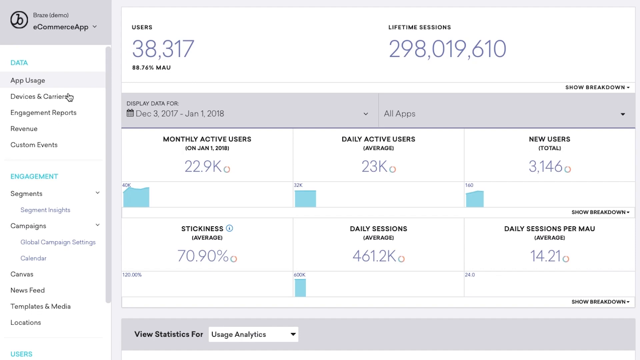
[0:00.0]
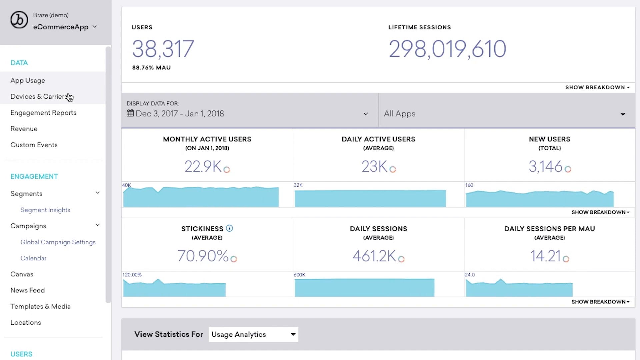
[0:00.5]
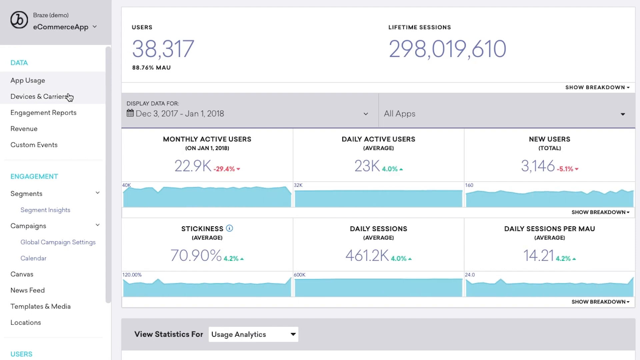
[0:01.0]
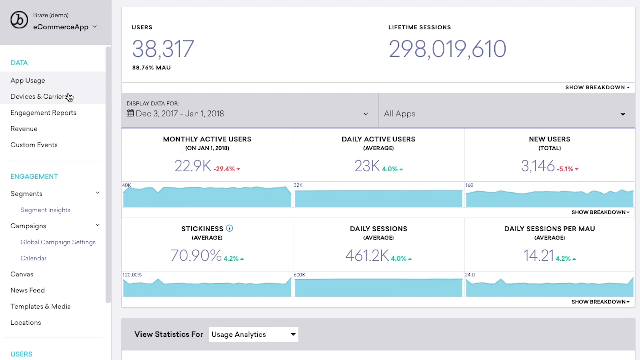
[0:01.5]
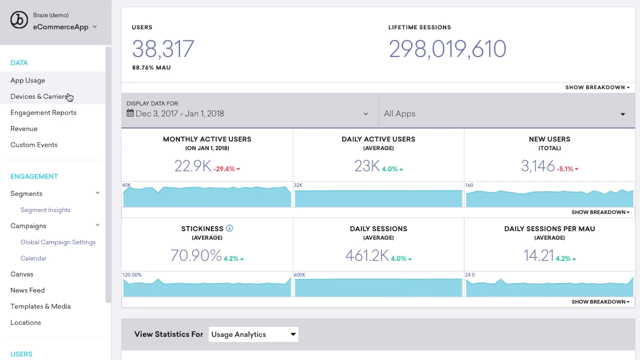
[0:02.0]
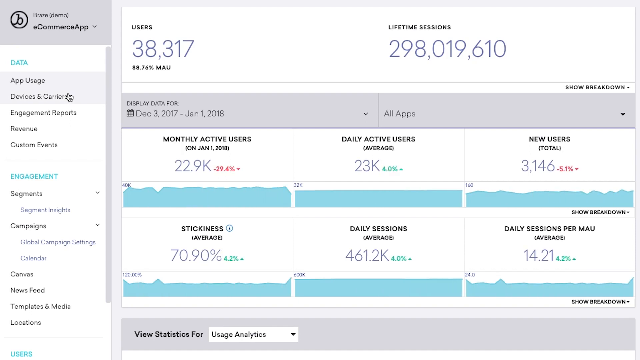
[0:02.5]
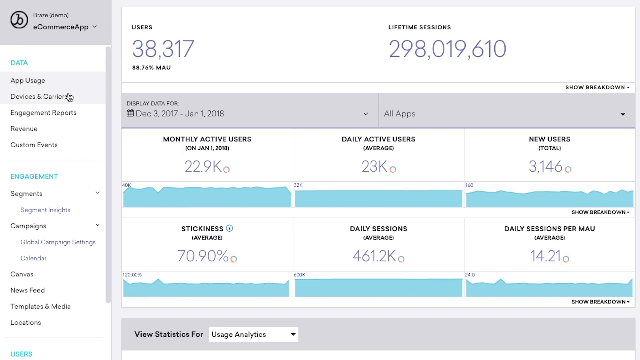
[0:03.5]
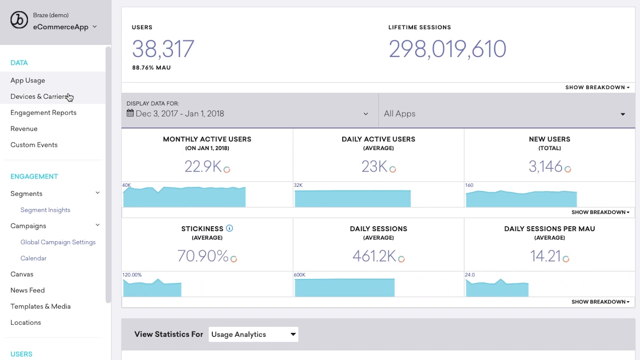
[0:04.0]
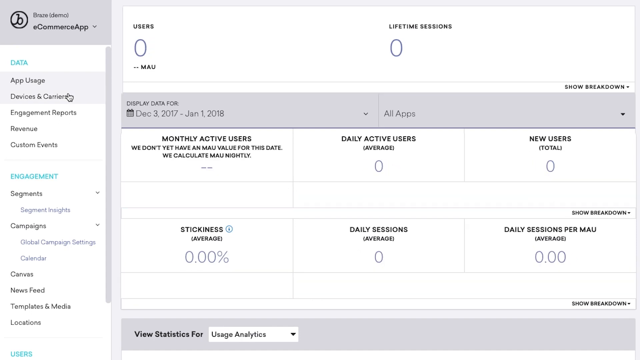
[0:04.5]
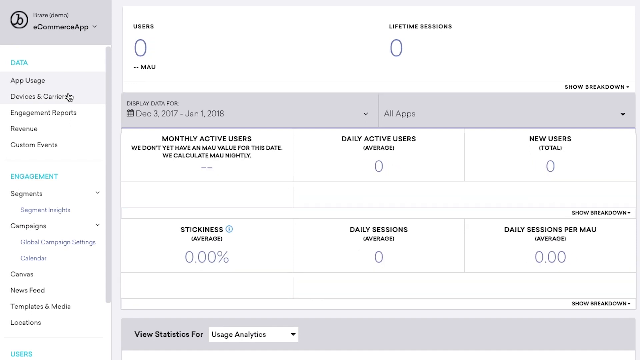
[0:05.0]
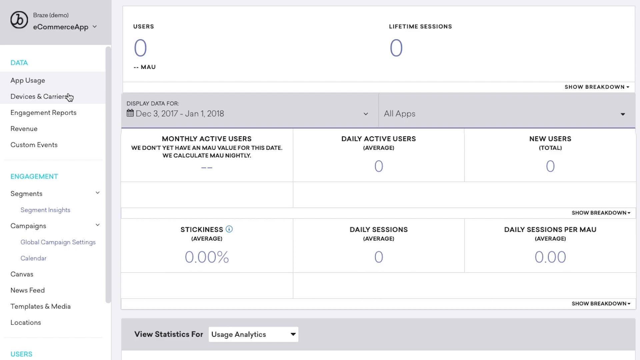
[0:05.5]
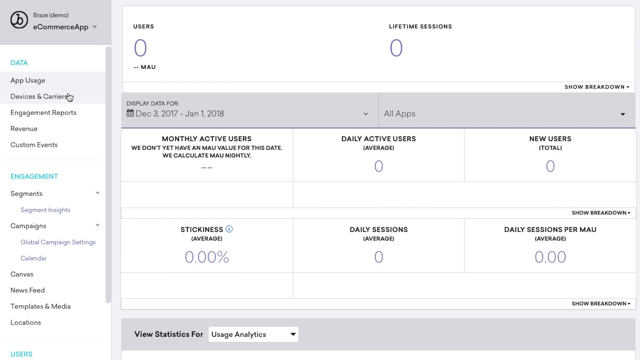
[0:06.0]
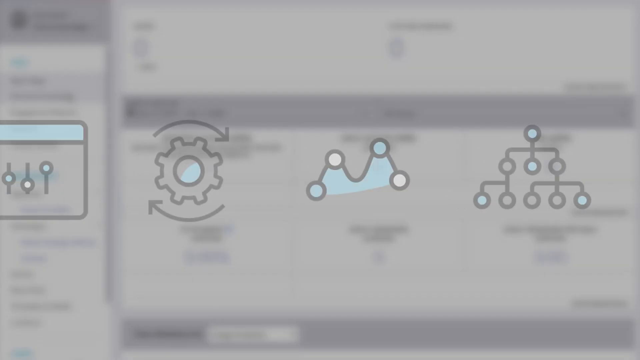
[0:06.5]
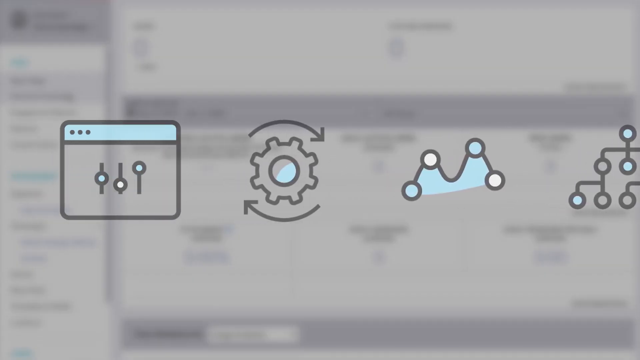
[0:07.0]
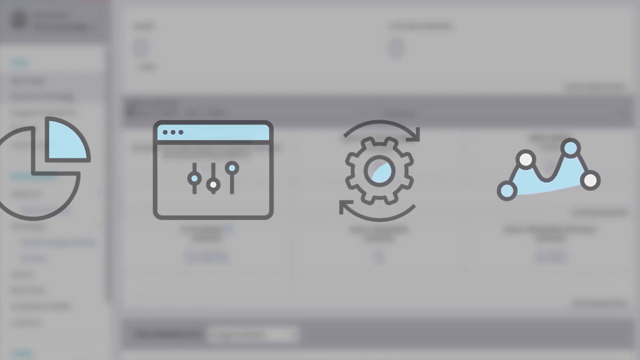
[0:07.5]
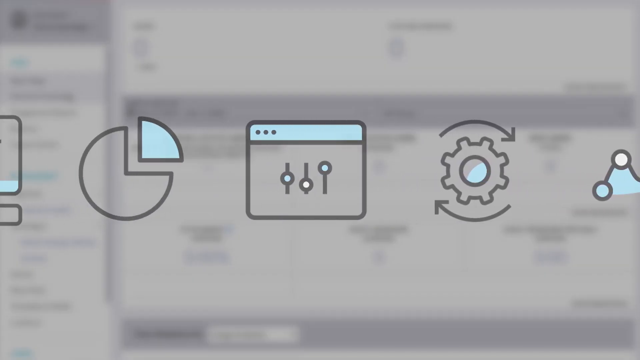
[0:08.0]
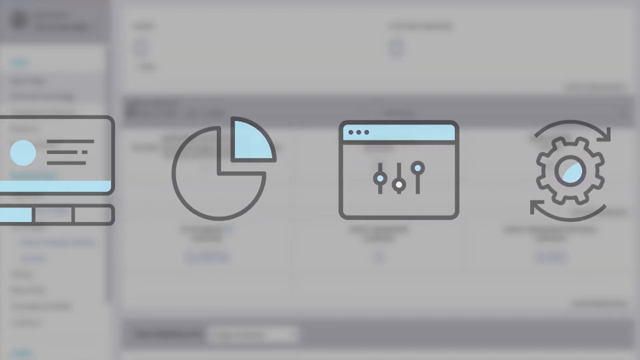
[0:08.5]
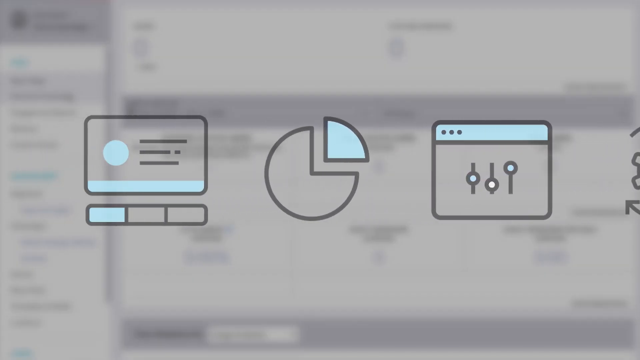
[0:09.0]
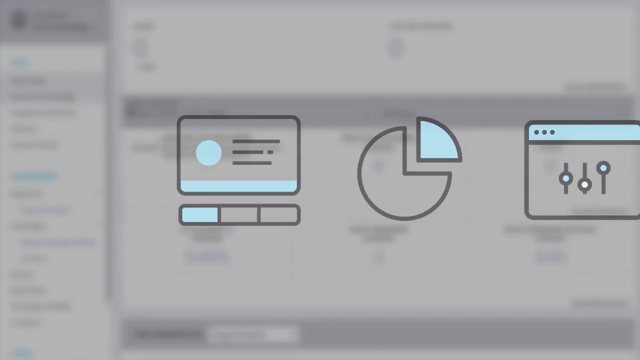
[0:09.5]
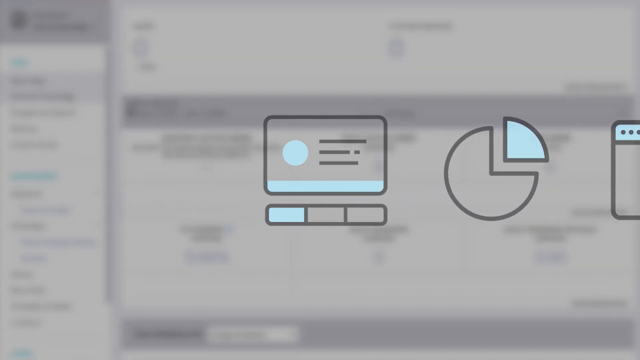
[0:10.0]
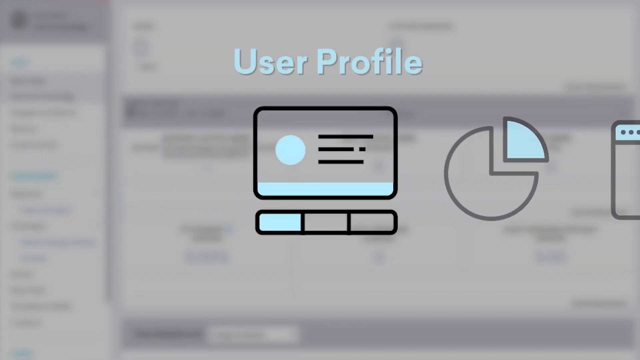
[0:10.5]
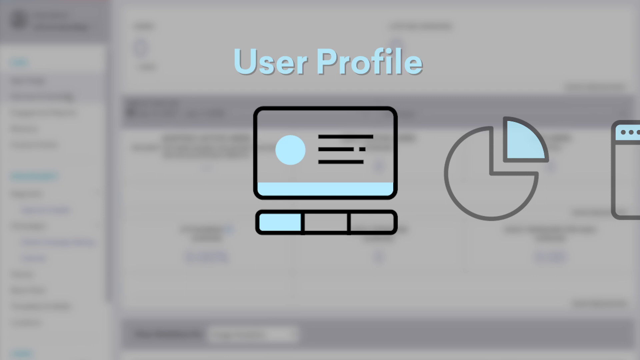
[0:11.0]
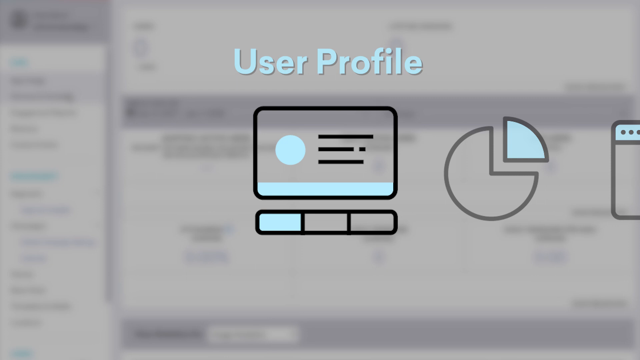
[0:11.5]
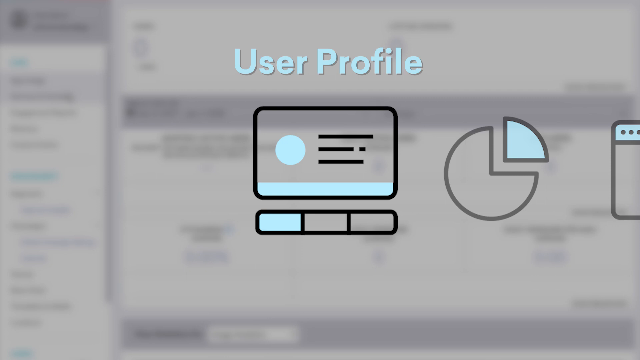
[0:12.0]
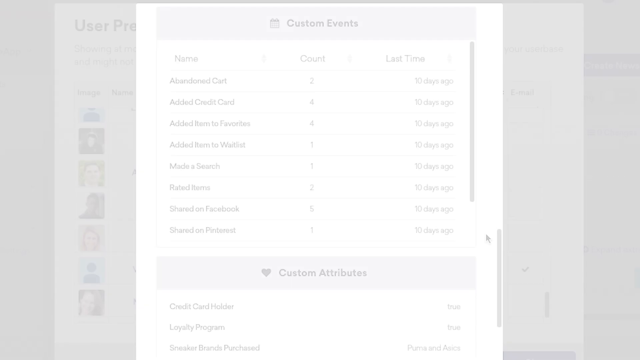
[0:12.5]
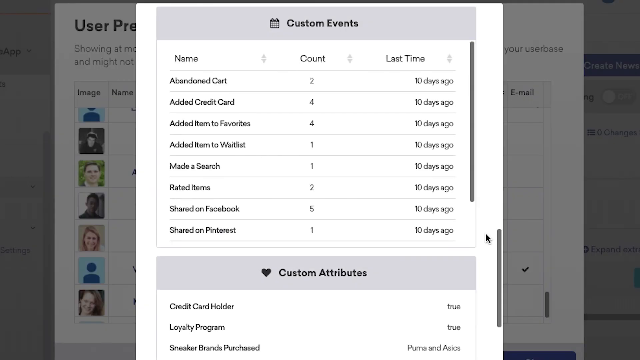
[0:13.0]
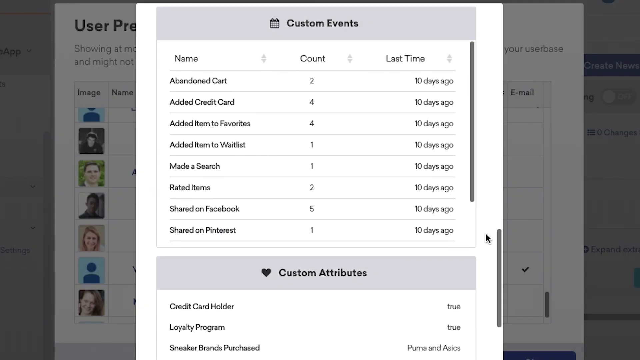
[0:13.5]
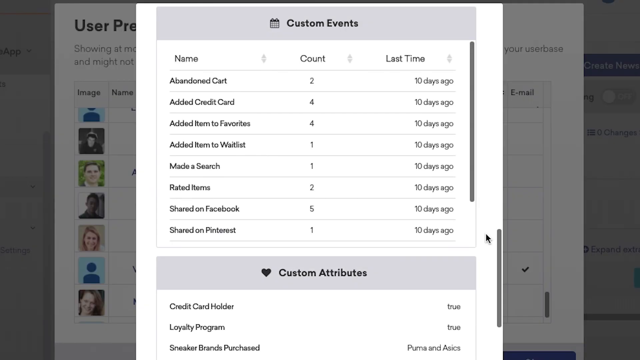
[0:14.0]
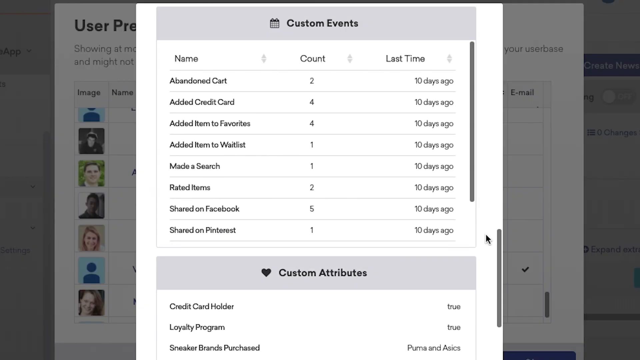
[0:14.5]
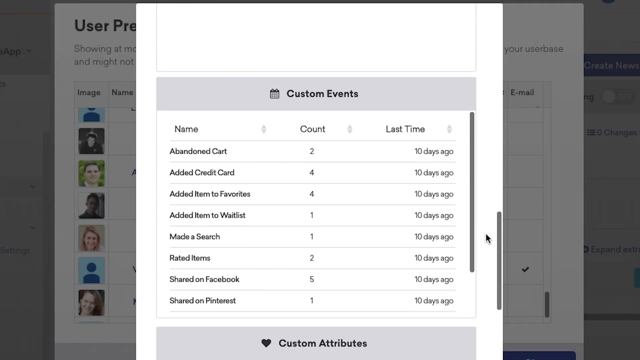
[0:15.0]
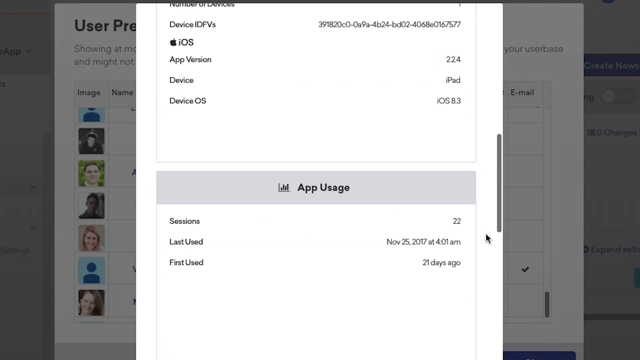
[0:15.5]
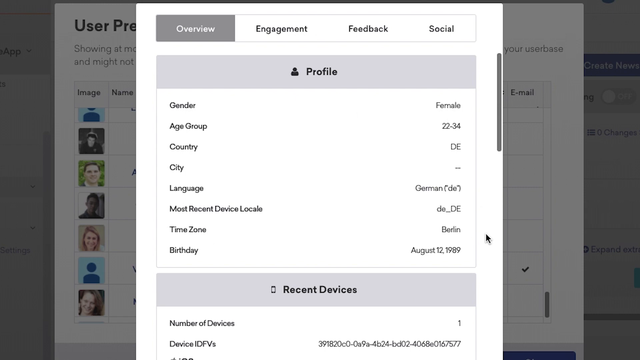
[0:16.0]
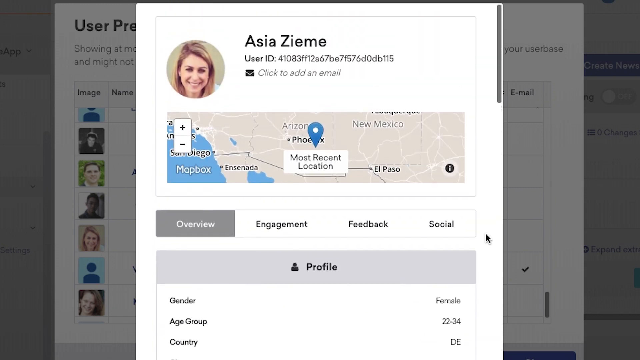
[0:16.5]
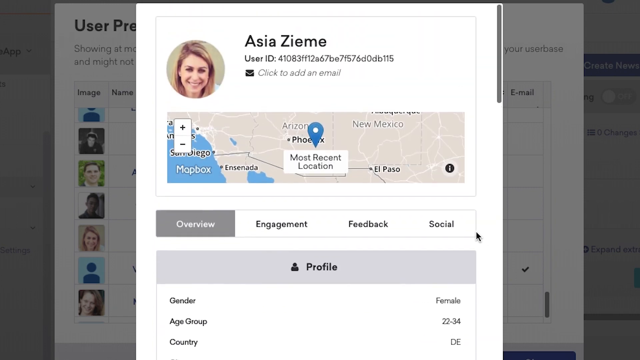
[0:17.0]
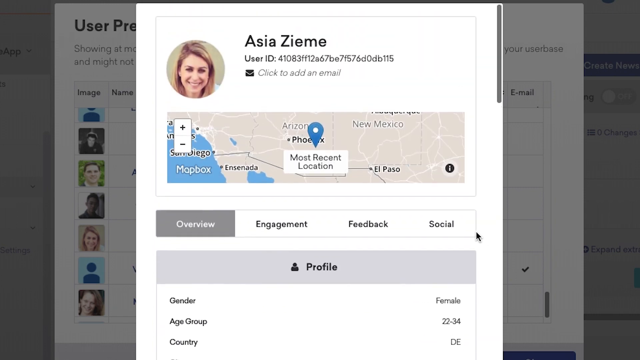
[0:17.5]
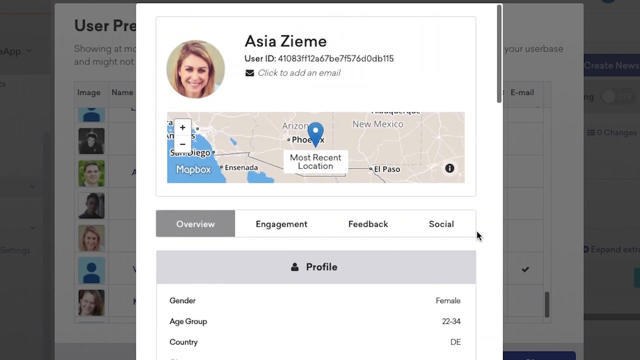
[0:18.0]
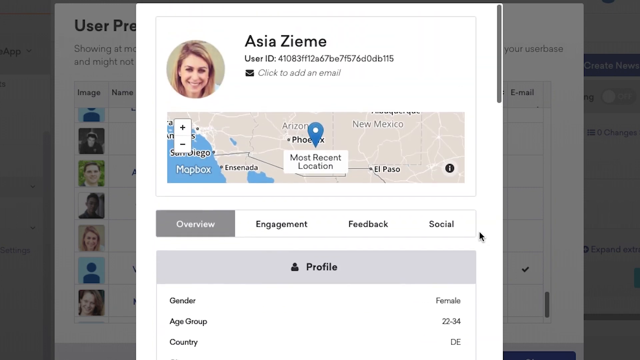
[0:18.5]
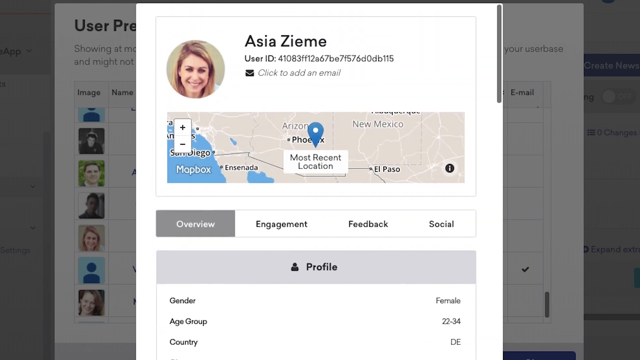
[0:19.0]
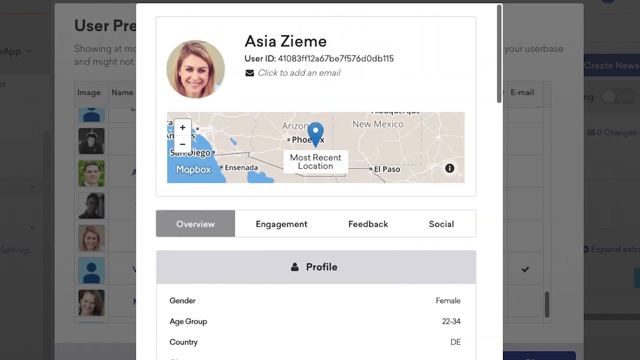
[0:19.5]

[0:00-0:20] A white screen on what looks like a computer monitor shows what appears to be a program. In the upper left corner it reads "e-commerce app." Below, a column is headed with the word "data," followed in black text by "app usage," "devices," "engagement reports," "revenue" and "custom events." The menu continues with the word "engagement" in blue text, and below that a breakdown into "segments," "campaigns," "Canvas" and "news feeds." On the right is what looks like a calendar for the app. At its upper left it reads "users 38,317," and to the right "lifetime sessions 298,000,019,610." Below, against a gray banner, it says "display data" with the date "December 3rd, 2017 through January 1st, 2018," and to the right it says "all apps" with a pull-down button. Below that is a breakdown into subsections in boxes with black text, from left to right: "monthly active users" for "January 1st, 2018" at 22,900; "daily active users" to the right with an average of 23,000; and "new users" at 3,146.